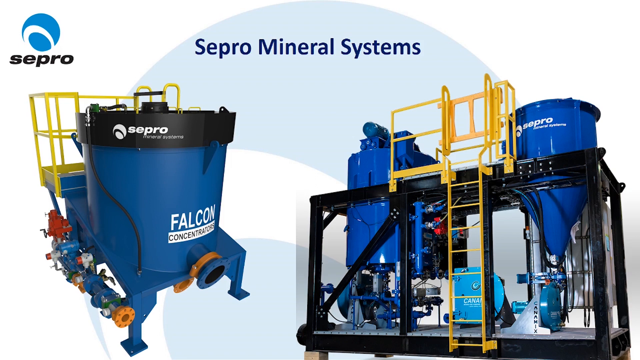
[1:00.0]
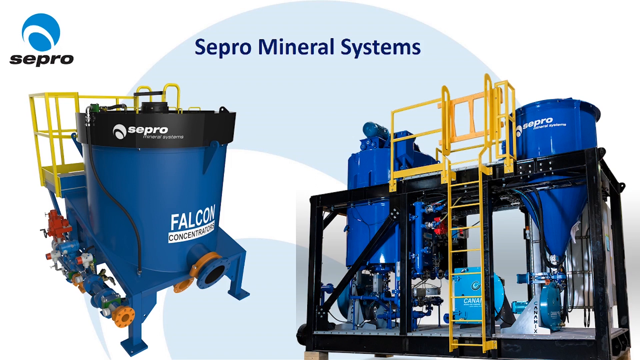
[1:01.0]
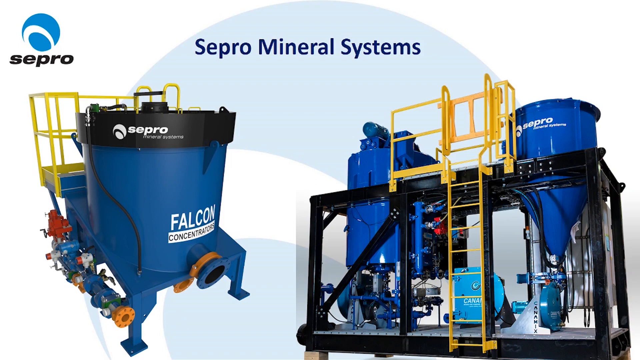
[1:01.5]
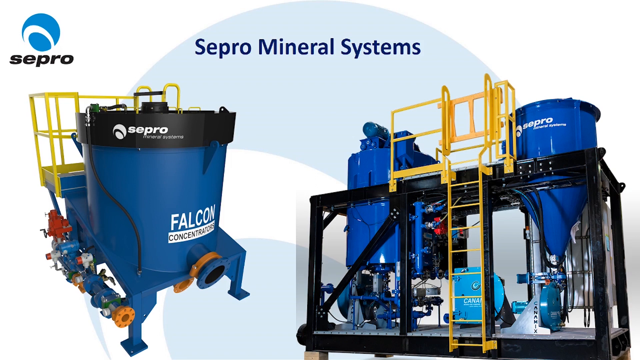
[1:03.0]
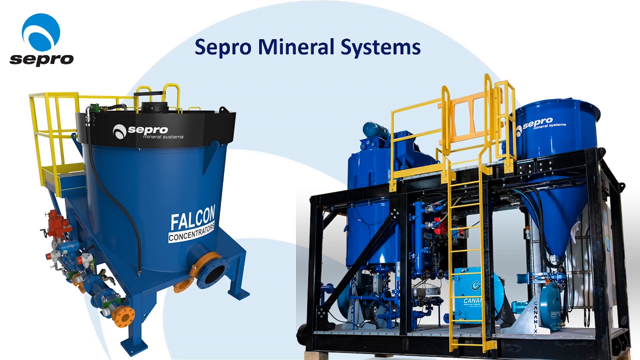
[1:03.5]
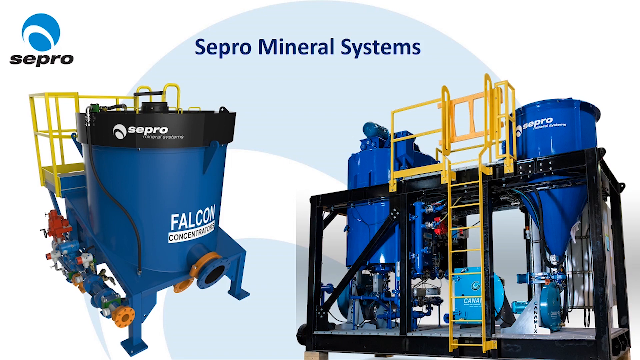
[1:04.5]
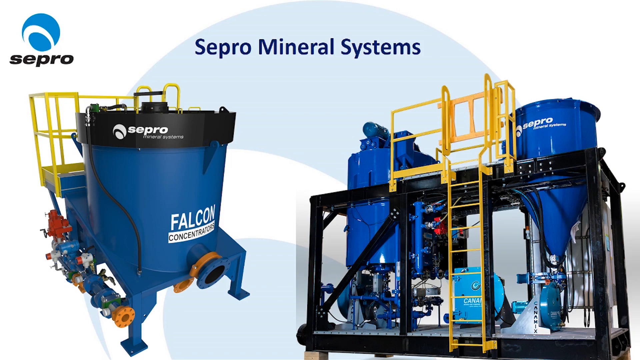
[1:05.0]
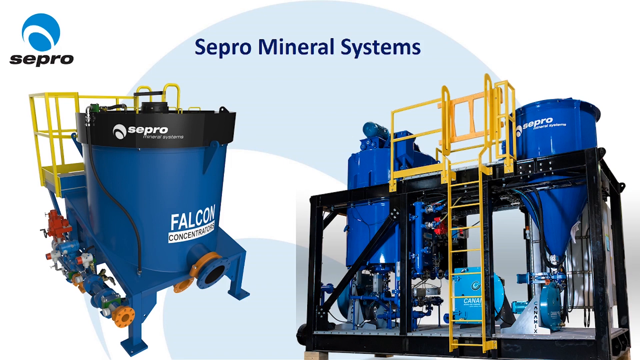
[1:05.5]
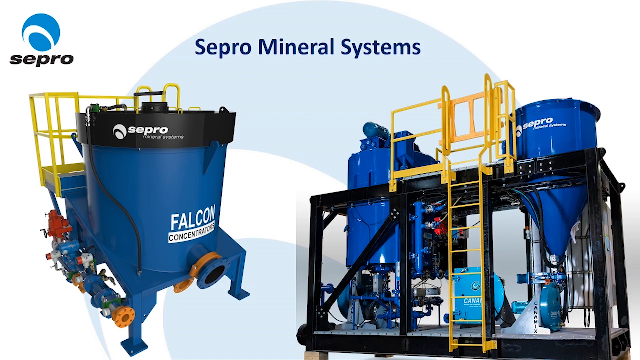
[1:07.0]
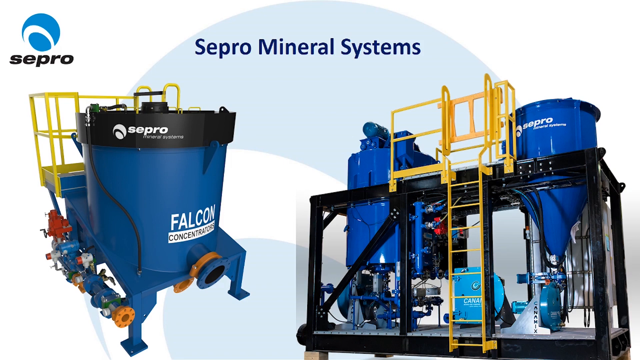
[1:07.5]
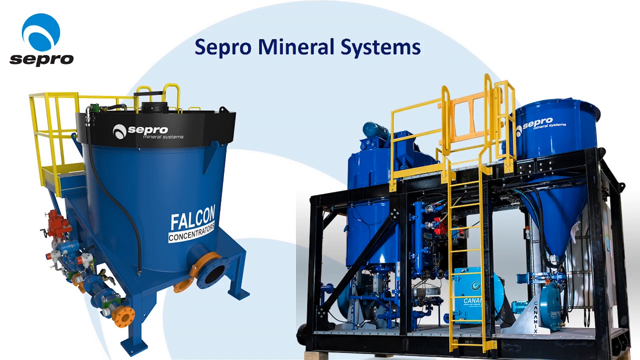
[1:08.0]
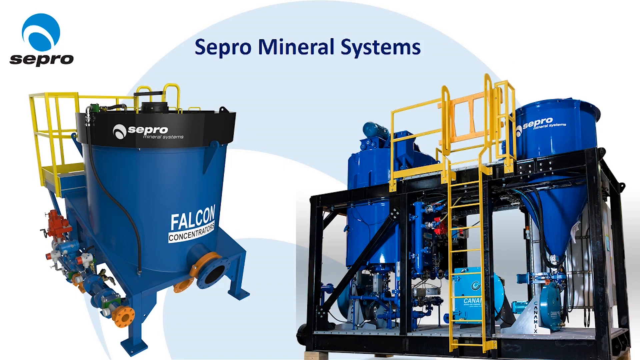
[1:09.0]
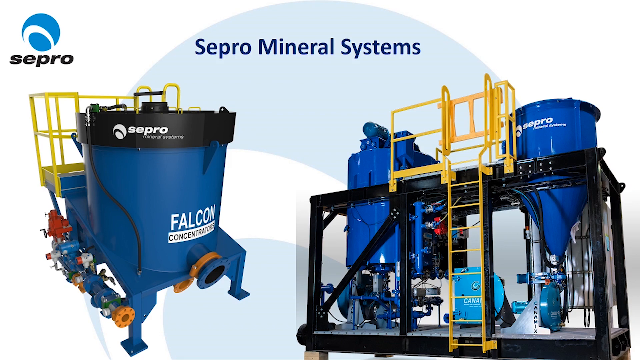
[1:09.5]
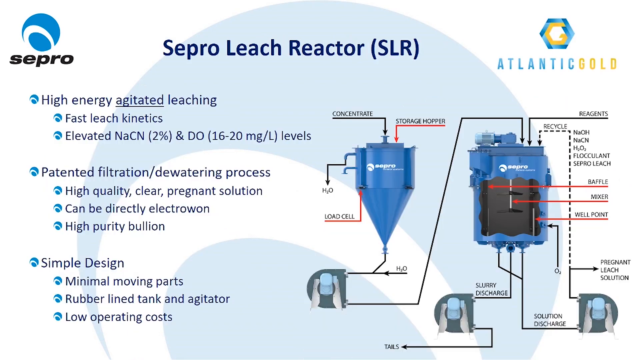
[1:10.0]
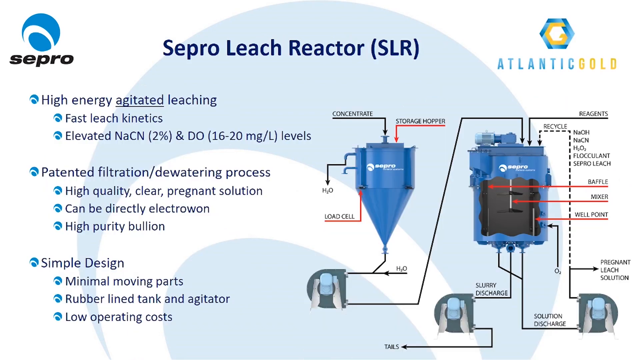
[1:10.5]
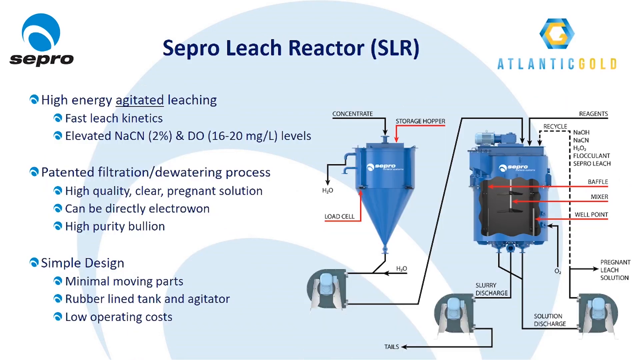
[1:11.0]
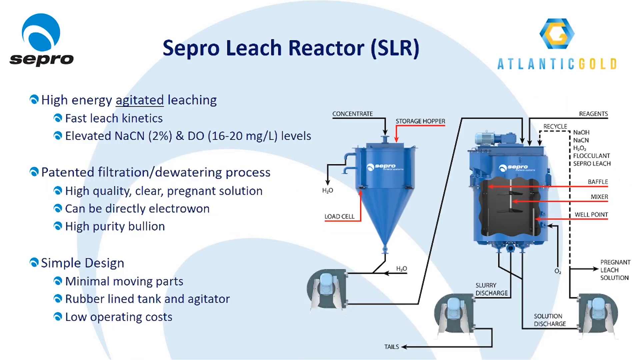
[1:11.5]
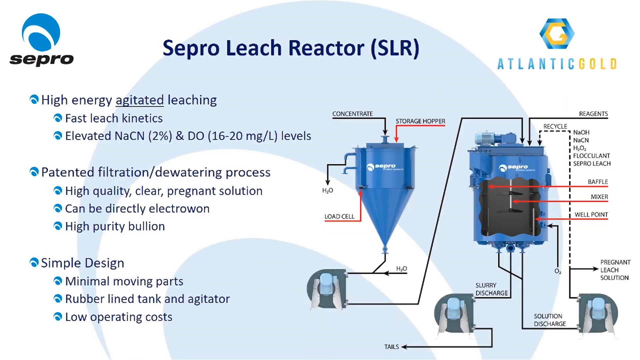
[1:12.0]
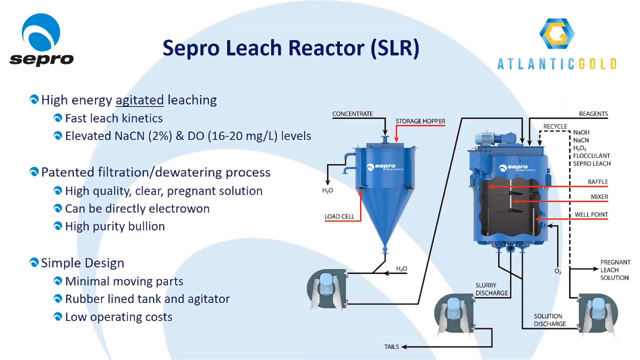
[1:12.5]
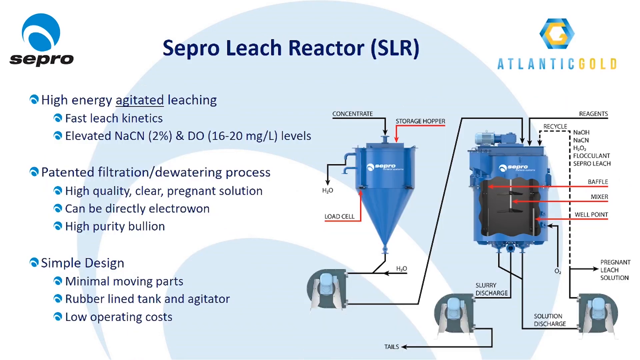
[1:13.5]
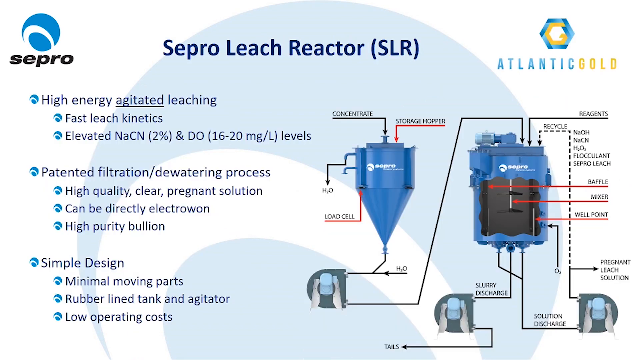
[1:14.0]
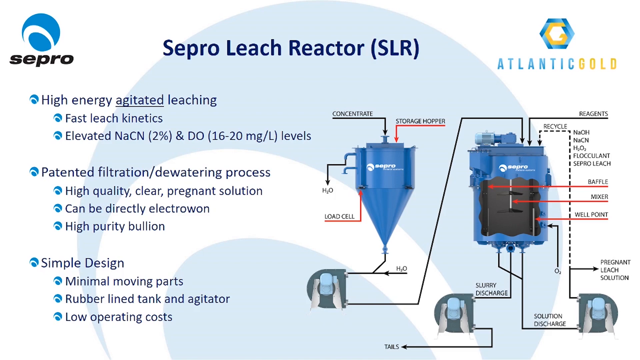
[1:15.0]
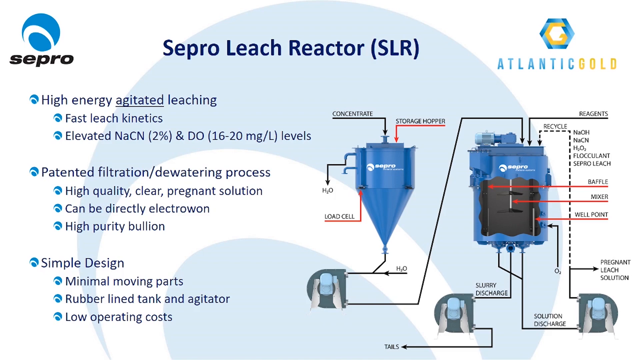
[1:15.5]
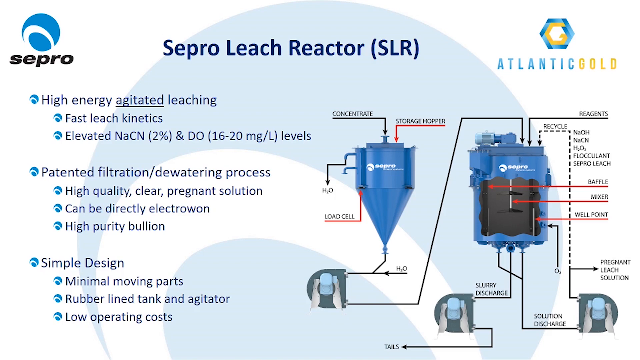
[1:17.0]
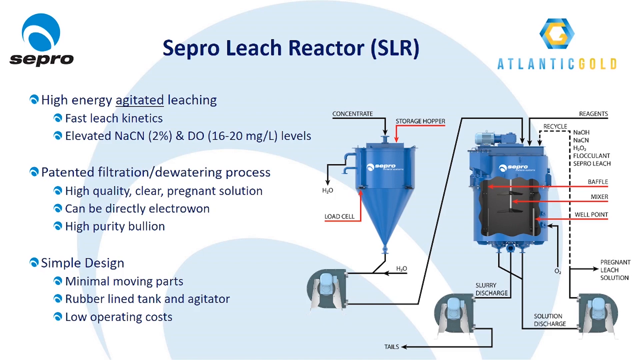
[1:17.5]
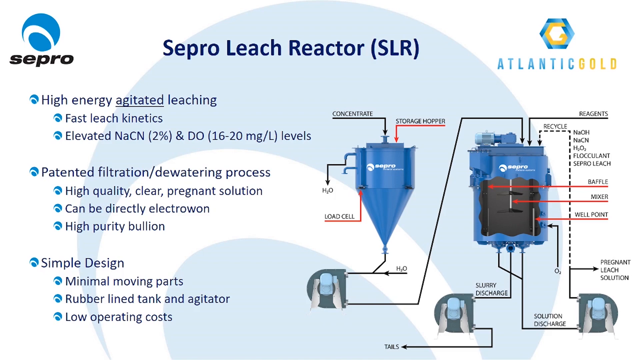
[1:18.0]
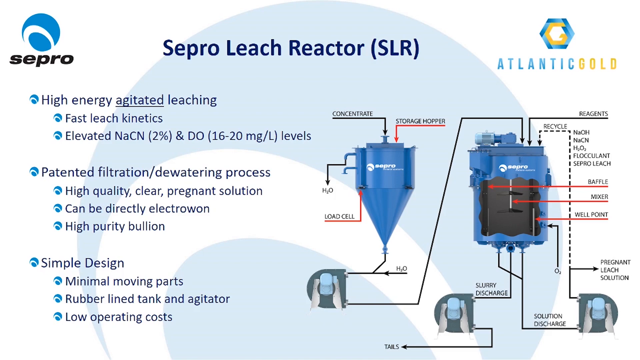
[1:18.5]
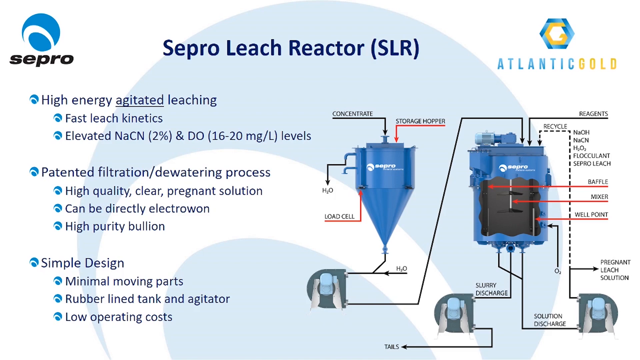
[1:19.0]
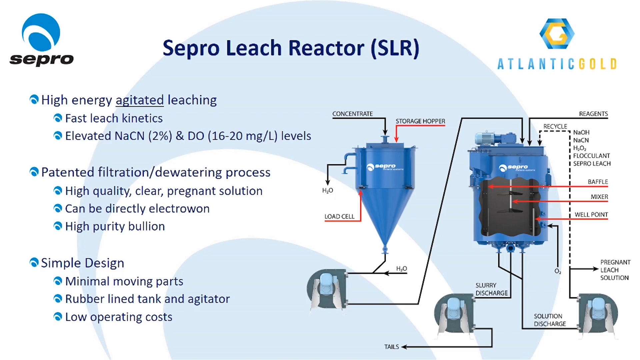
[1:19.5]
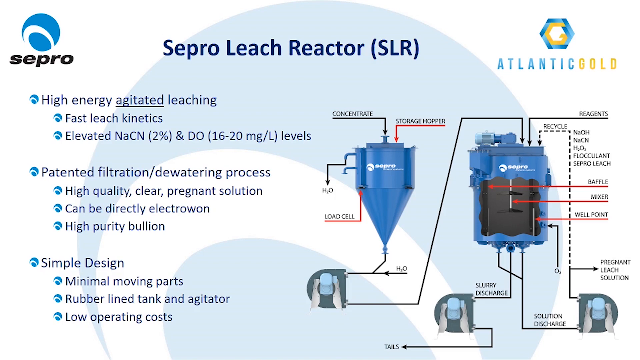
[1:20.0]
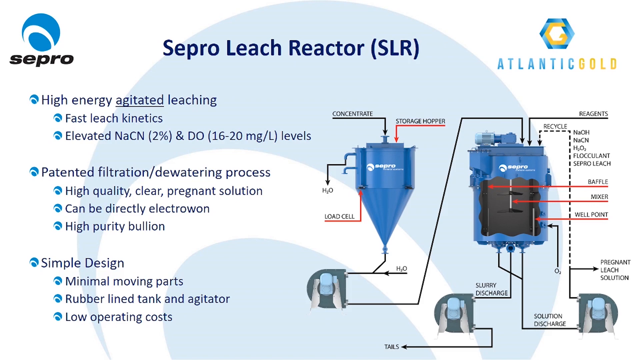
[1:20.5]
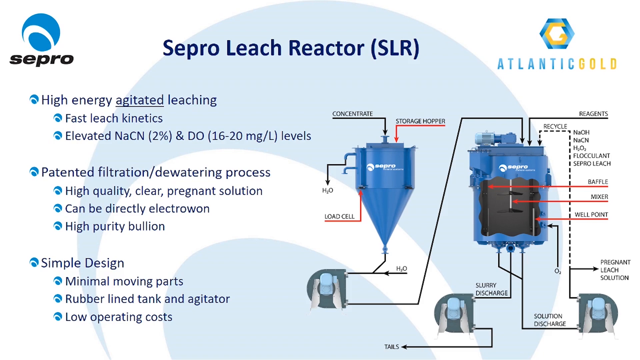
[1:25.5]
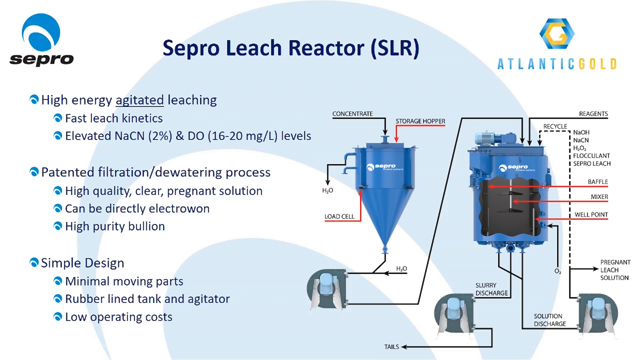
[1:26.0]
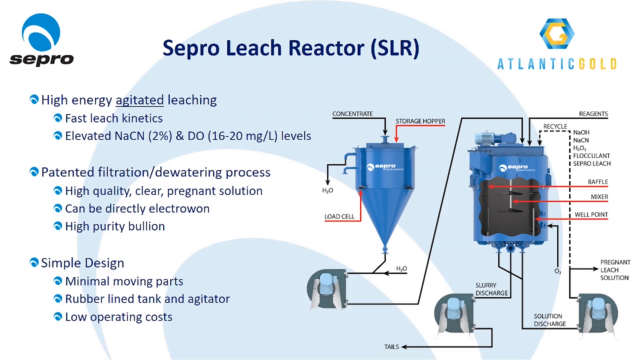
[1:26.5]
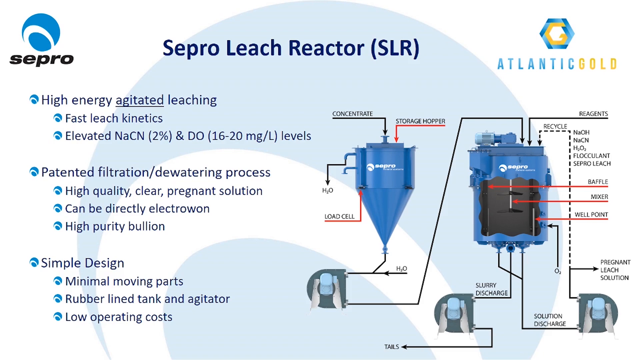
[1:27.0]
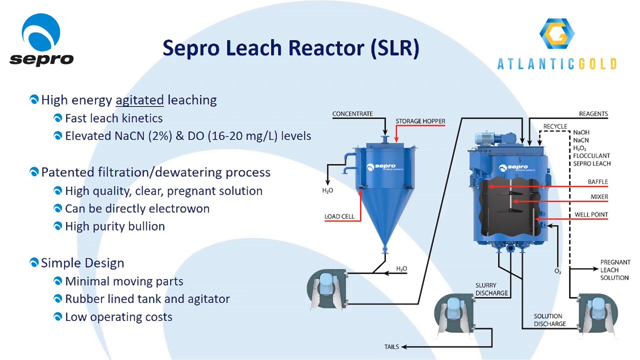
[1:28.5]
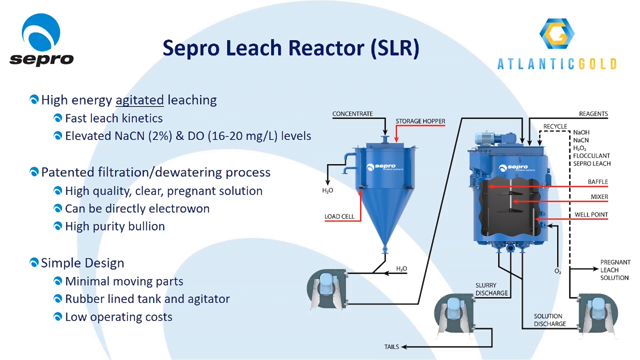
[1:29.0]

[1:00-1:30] The Sepro Mineral Systems page shows two images depicting what the machines do. The next page is an infographic of one of the machines, the "SEPRO Leach Reactor, SLR." It reads "high-energy agitated leaching, fast leach kinetics, elevated NaCN 2%, and DO 16-20 MG/L levels, patented filtration dewatering process, high-quality clear pregnant solution, can be directly electrowon, high-purity bullion, simple design, minimal moving parts, rubber line tank and agitator, low operating costs." A diagram then depicts each part of the reactor, labeled with red lines, dashed lines and solid black lines. In red are "front storage hopper" and "load cell"; in black are "concentrate," "H2O," and "H2O" again at the bottom. On the interior side are "agents," "recycle," "NaCH," "NaCN," "H2O," "flocculant," and "sepro leach." Red lines point to "baffle," "mixer" and "well point," a dashed line is labeled "pregnant leach solution," and at the very bottom of the machine are "slurry discharge" and "solution discharge."